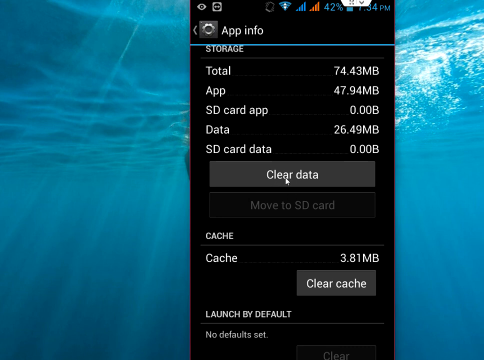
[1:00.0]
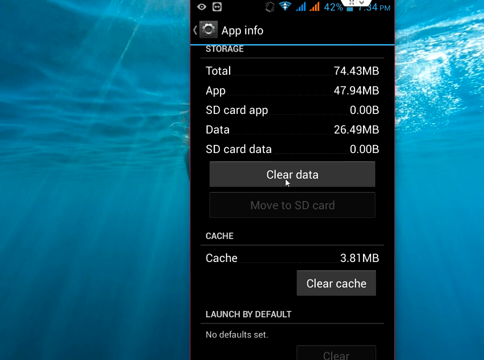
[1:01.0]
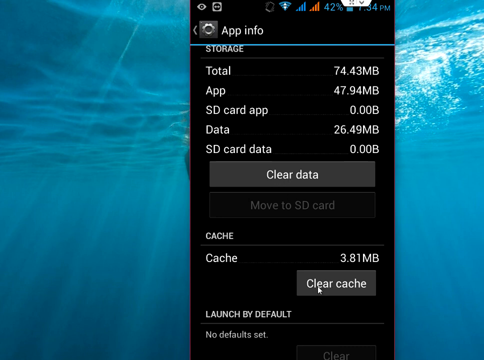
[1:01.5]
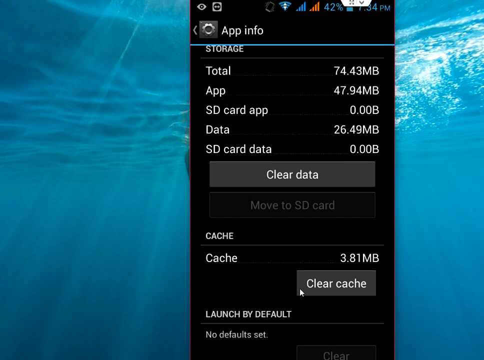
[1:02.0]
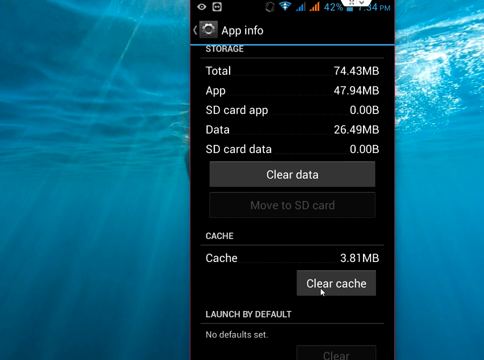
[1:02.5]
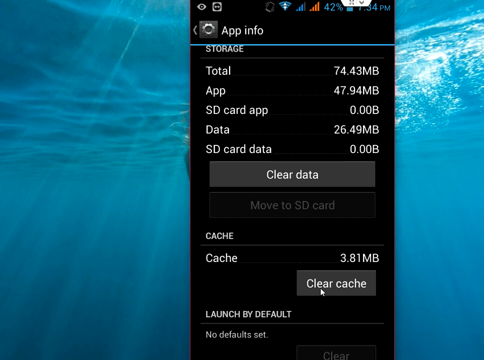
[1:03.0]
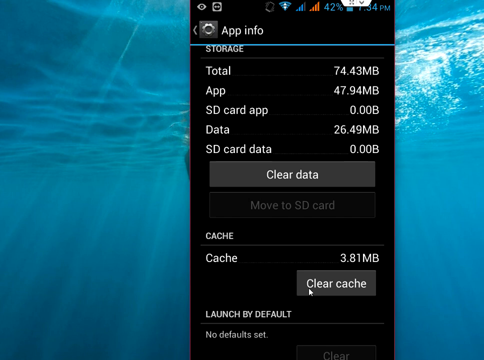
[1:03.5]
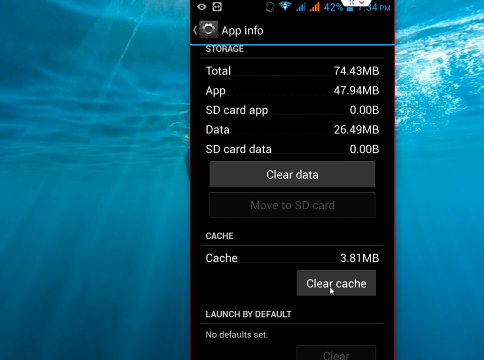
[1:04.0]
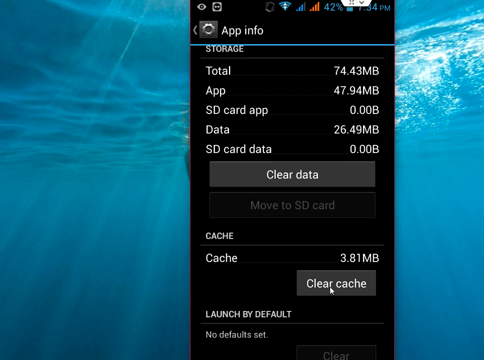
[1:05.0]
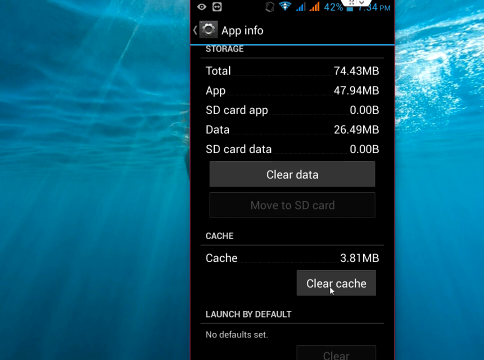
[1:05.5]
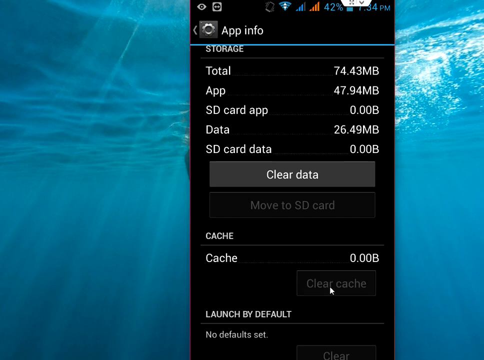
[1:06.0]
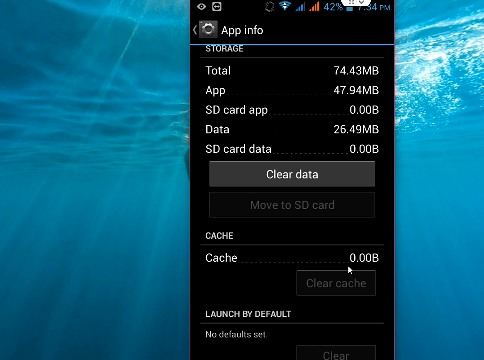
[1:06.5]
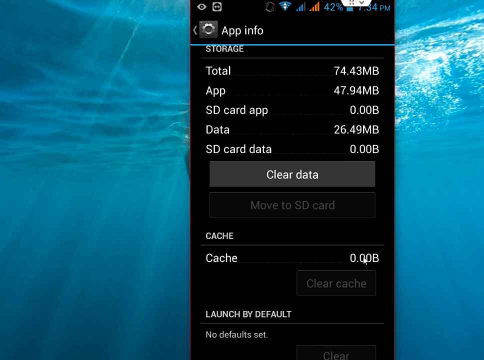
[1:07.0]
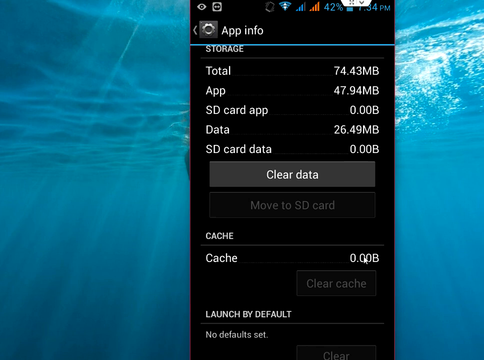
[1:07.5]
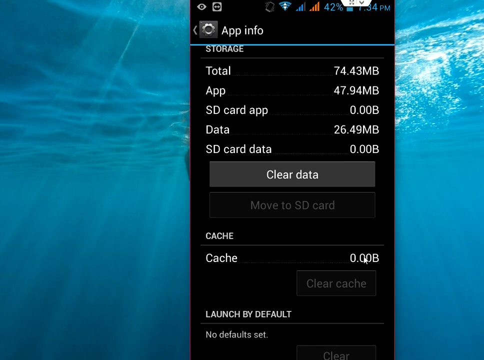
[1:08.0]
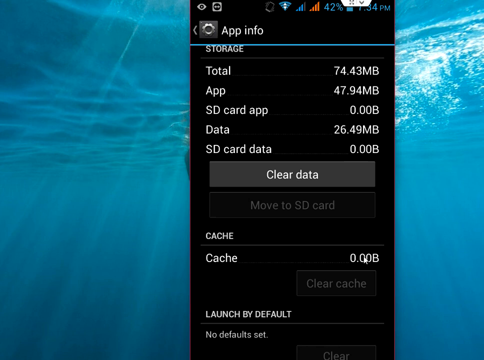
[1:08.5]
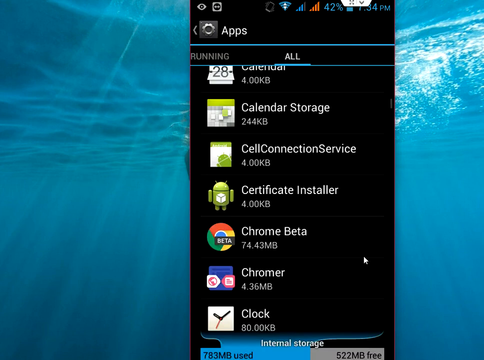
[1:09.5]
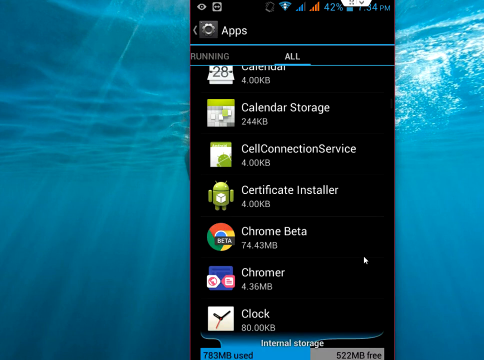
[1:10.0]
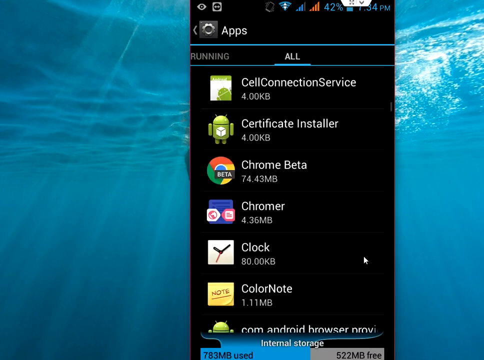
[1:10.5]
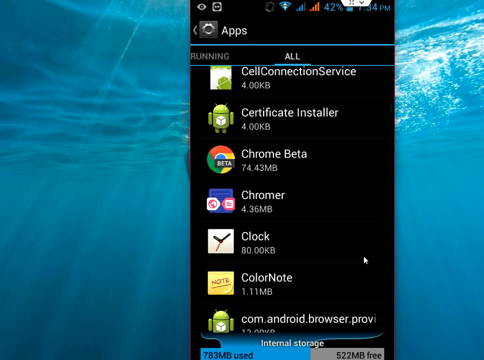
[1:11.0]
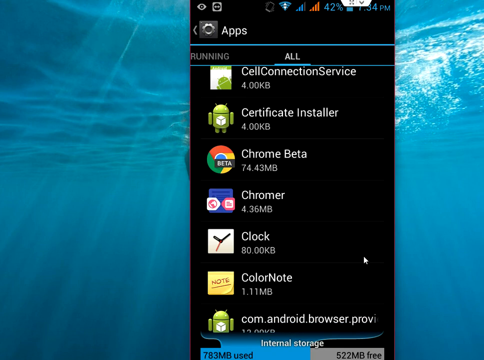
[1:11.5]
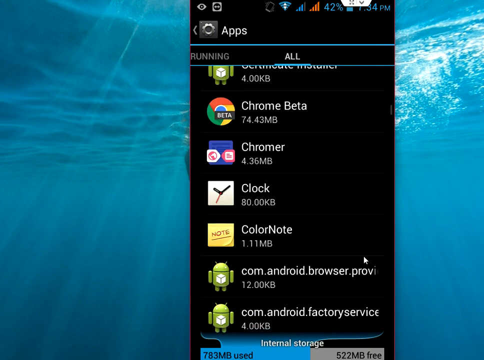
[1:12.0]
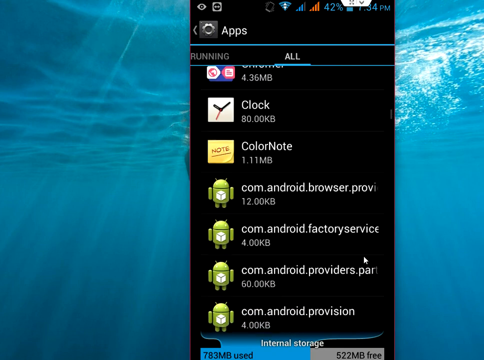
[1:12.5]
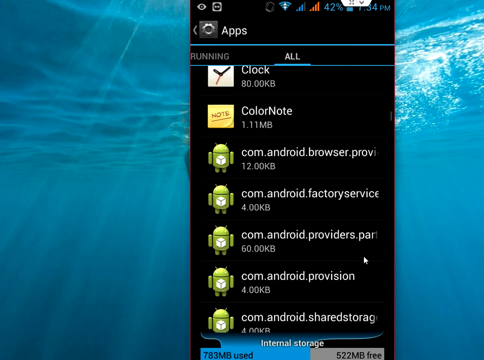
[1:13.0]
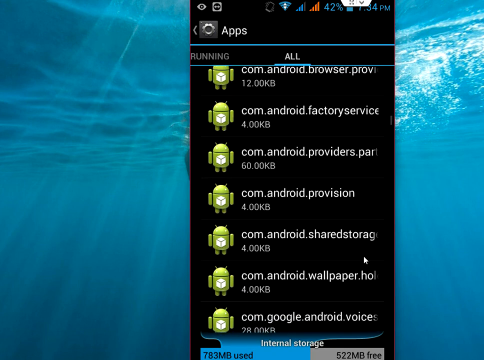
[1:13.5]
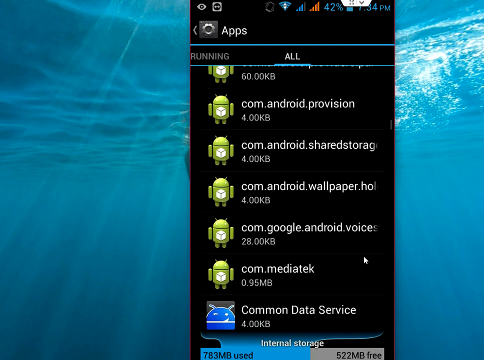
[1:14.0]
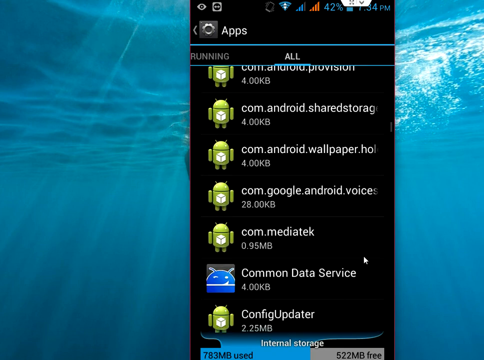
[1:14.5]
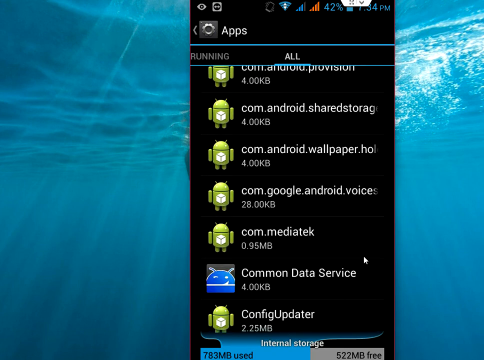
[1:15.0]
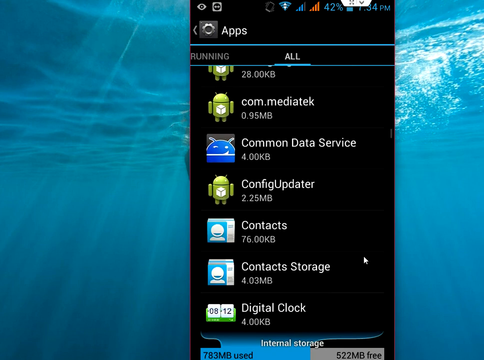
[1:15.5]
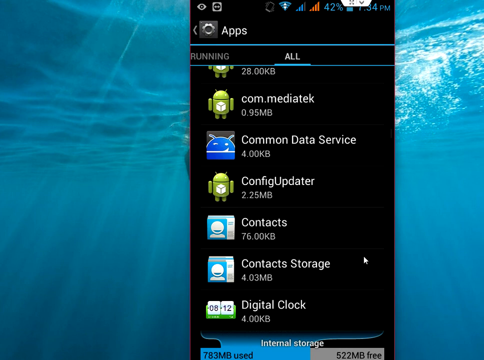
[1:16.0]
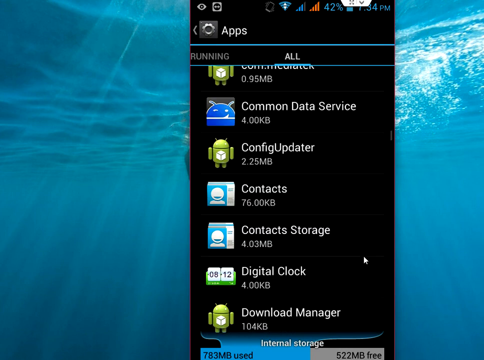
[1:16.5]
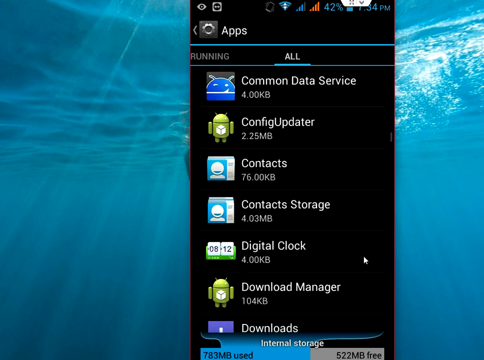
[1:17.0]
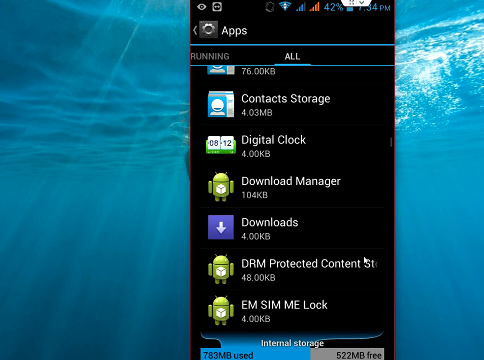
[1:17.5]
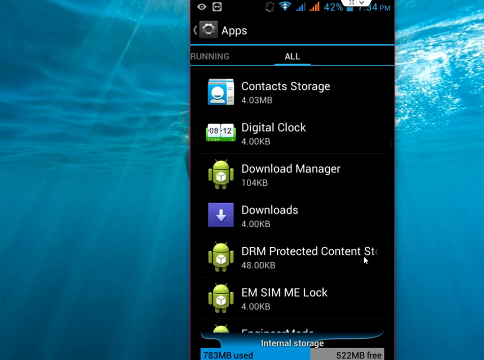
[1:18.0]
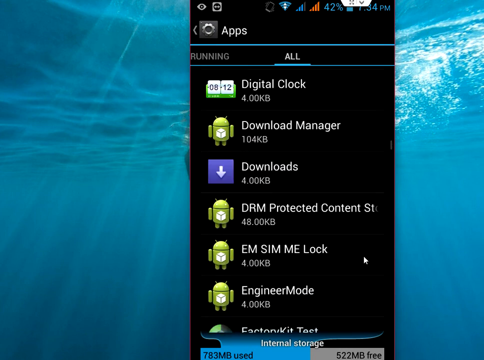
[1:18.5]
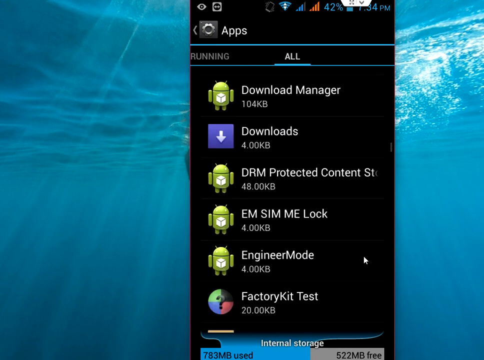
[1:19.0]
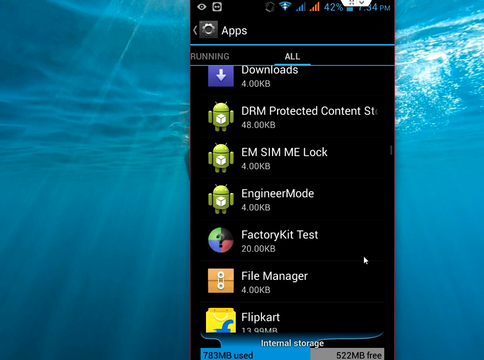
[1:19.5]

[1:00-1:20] In the Chrome beta storage configuration, 3.81 megabytes of cache is stored. The cursor moves a lot: it first hovers over the gray Clear Data button, apparently without clicking it, then moves down to the Clear Cache button, hovers over it as if explaining something, and presses it, and the cache goes to zero. The user then goes back to the all screen and scrolls down through the D's, the E's and the F's.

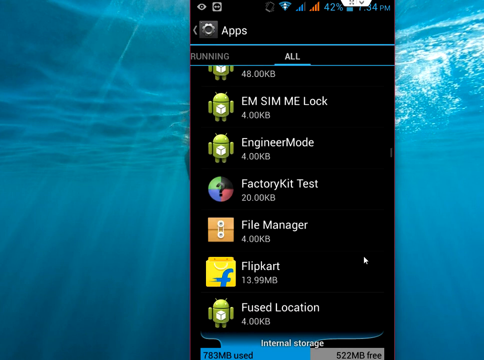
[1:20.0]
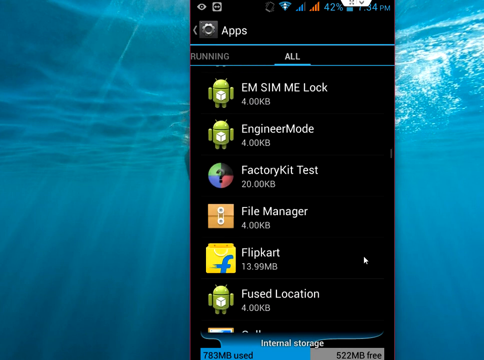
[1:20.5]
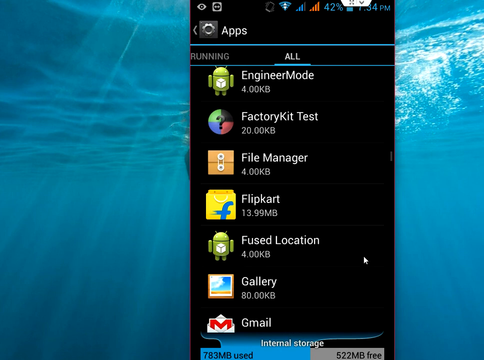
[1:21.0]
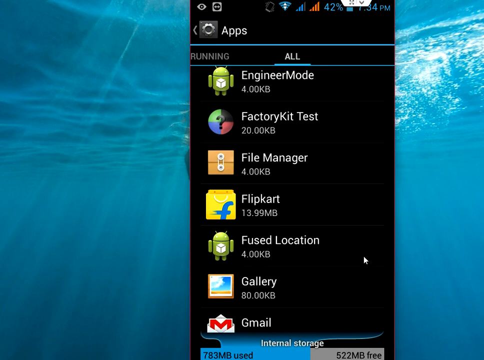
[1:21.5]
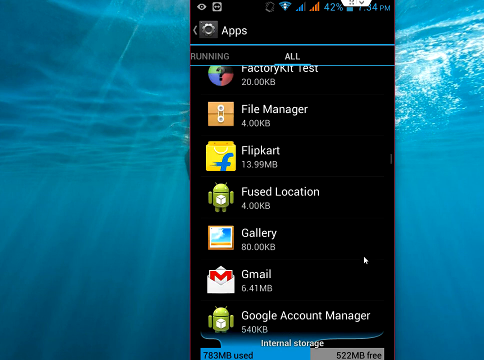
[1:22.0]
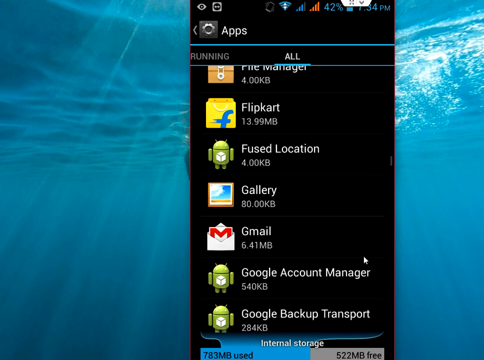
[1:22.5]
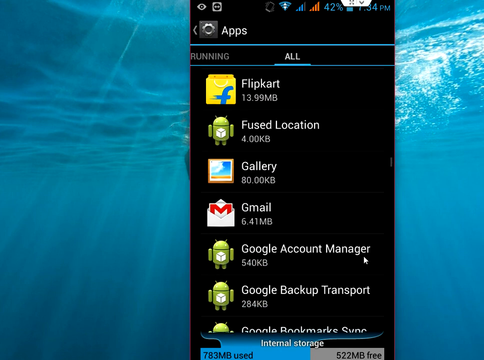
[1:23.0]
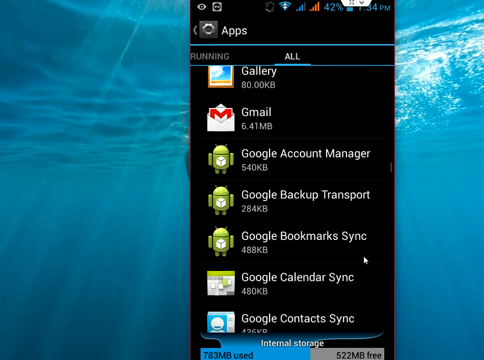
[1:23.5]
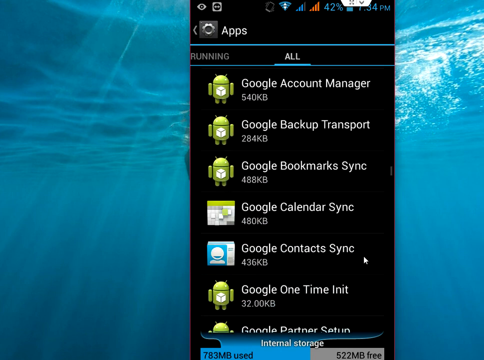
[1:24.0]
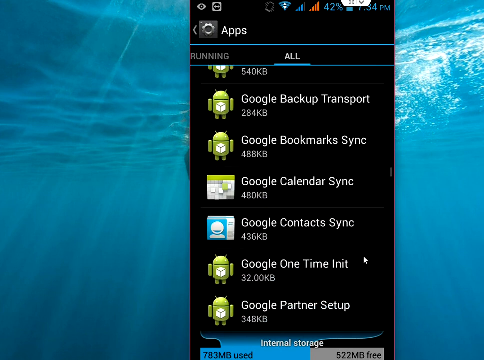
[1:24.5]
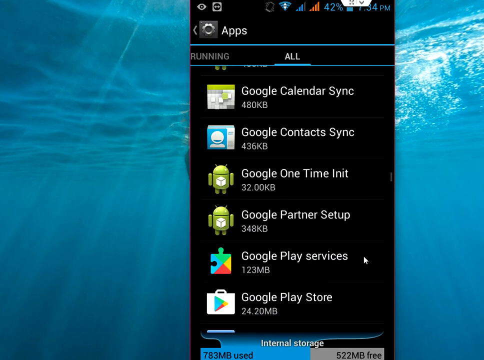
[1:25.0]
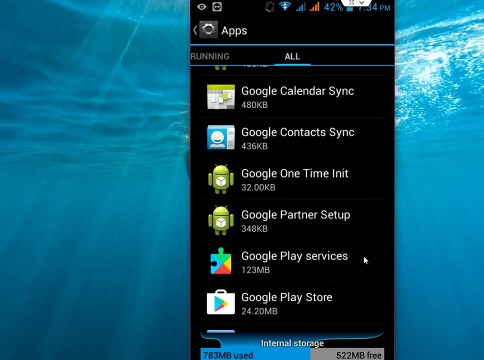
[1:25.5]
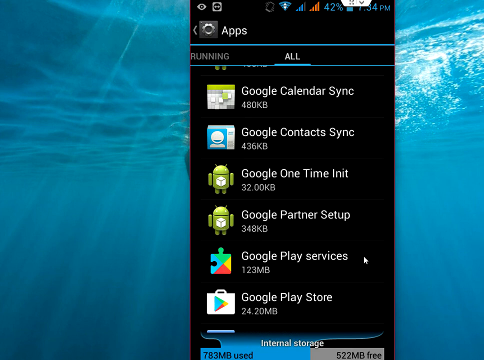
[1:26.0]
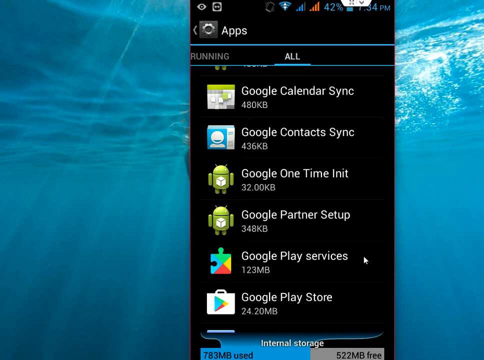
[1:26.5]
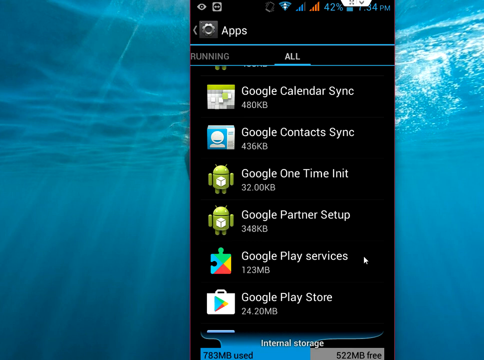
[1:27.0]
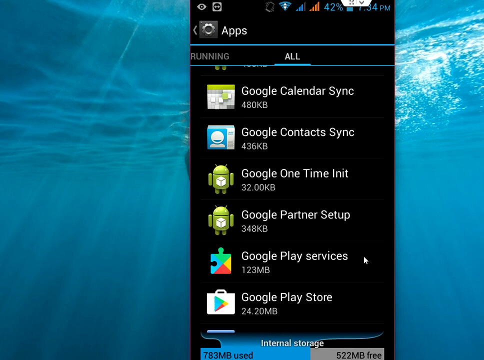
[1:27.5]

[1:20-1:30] The user uses the cursor to scroll down the list of apps to Google Play services and clicks into it. When the cursor clicks on an app, the app icon turns blue for a second to indicate the click. Everything else is static; only the list scrolling is in motion.